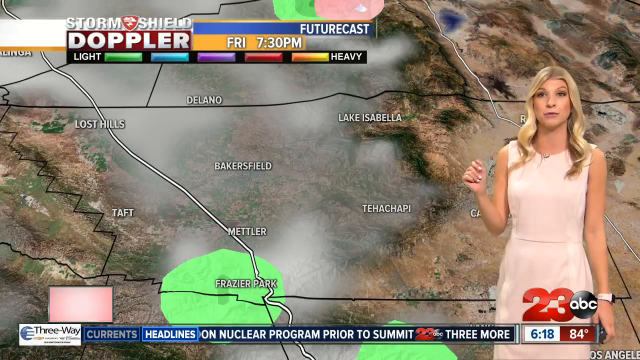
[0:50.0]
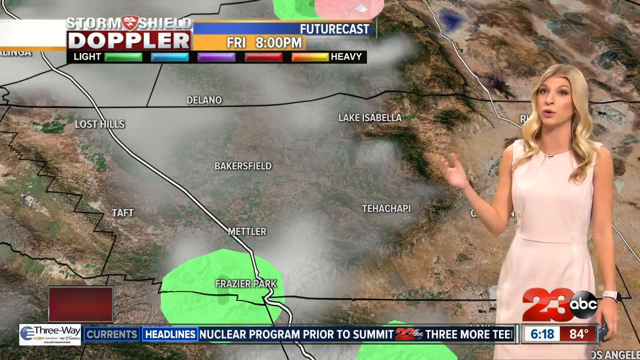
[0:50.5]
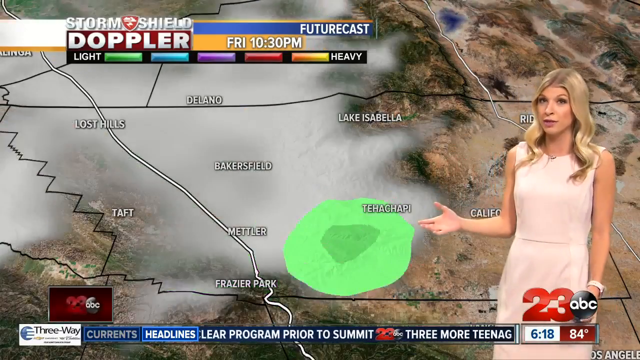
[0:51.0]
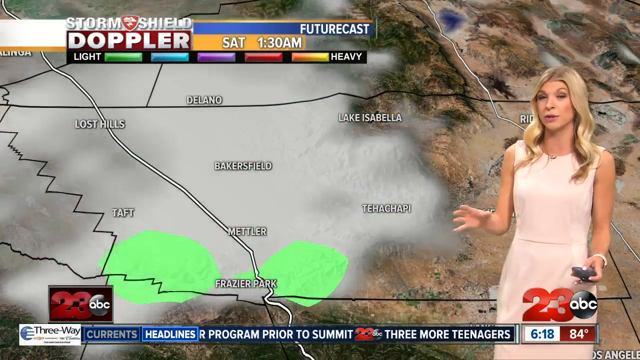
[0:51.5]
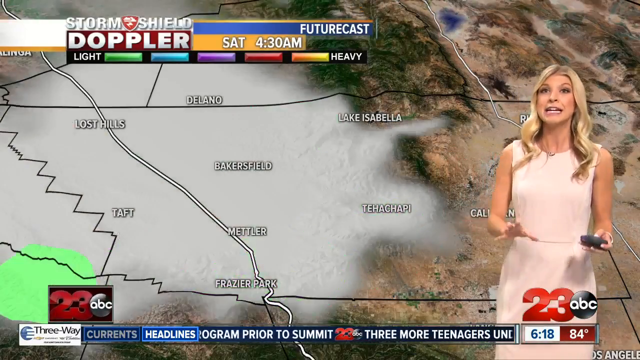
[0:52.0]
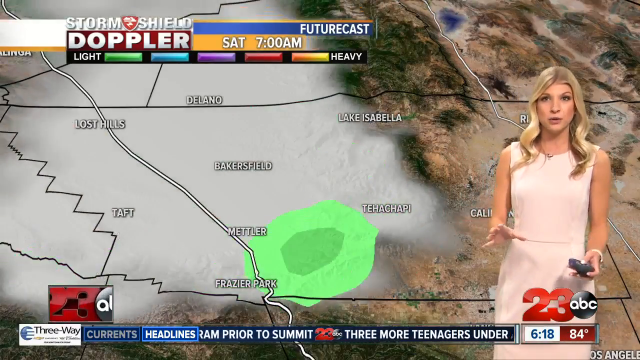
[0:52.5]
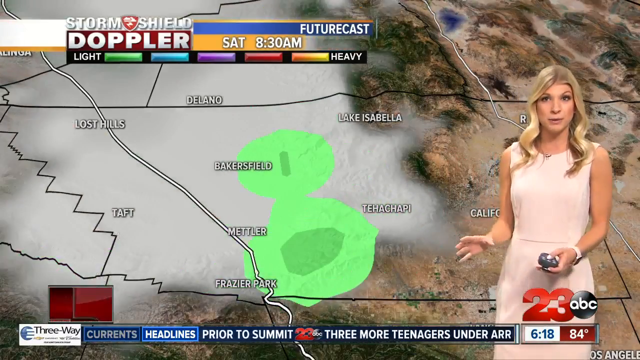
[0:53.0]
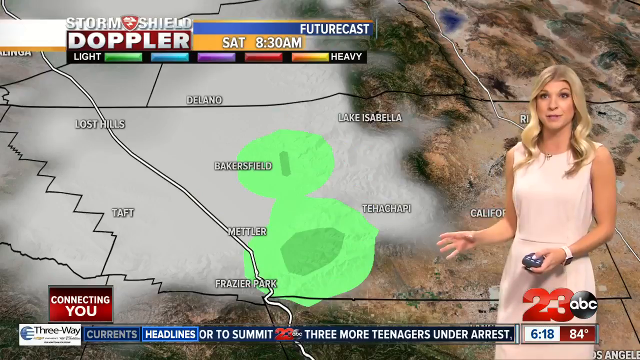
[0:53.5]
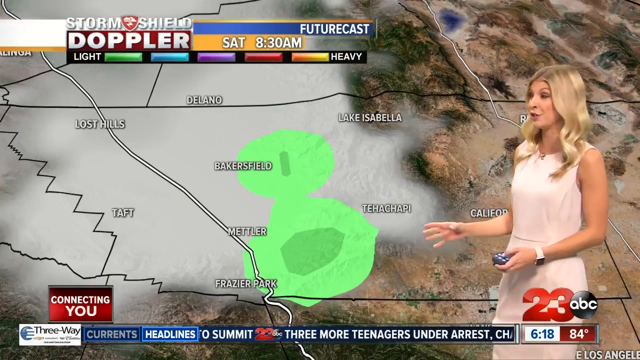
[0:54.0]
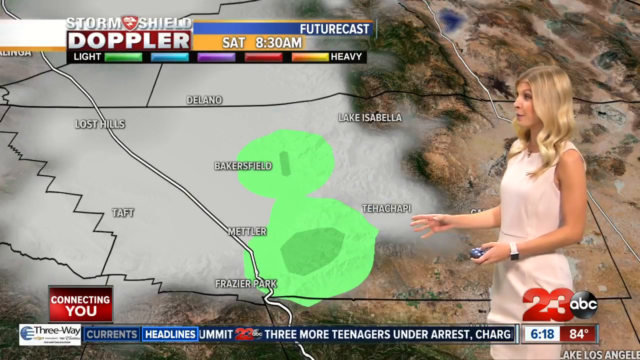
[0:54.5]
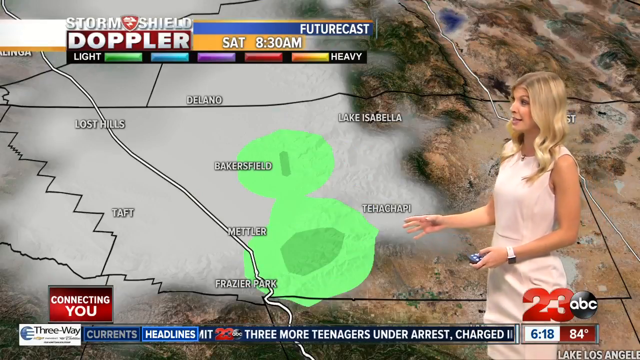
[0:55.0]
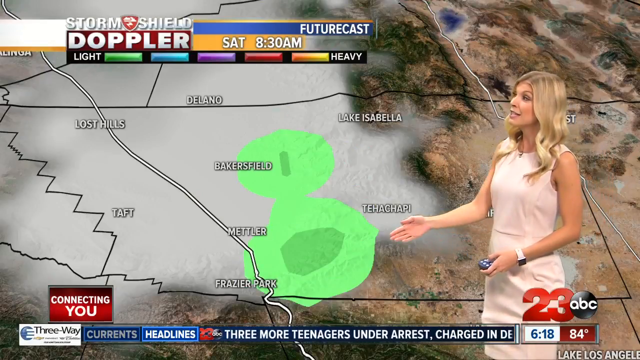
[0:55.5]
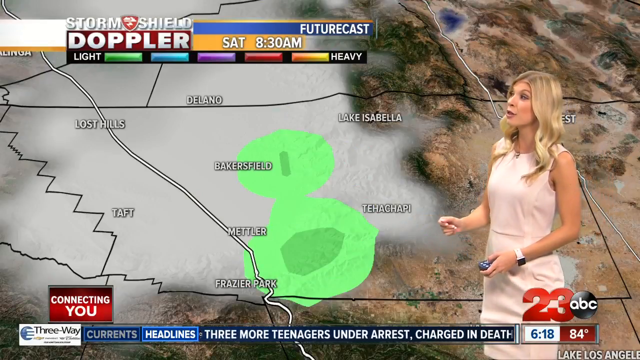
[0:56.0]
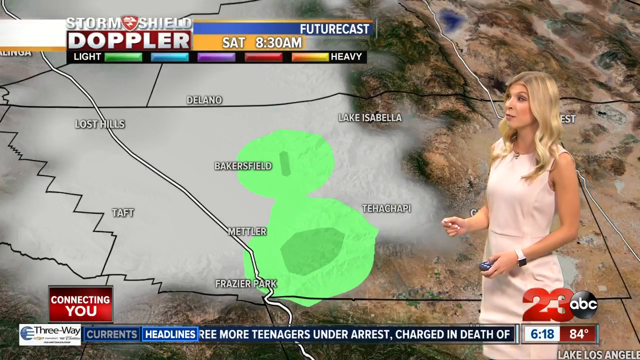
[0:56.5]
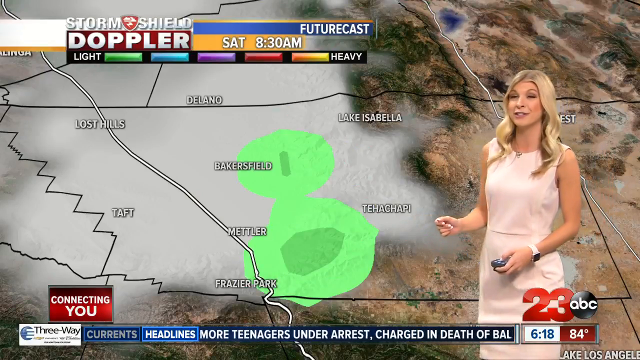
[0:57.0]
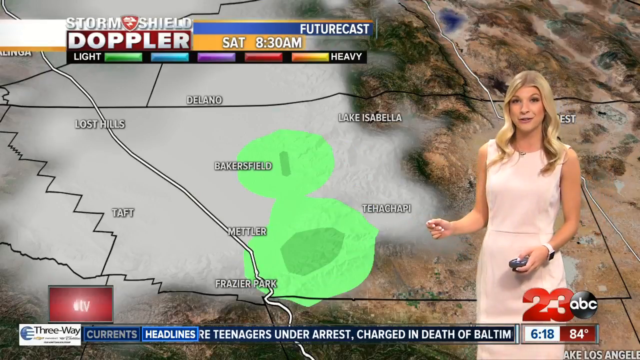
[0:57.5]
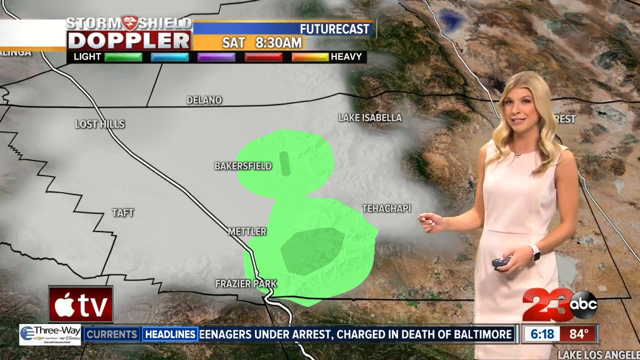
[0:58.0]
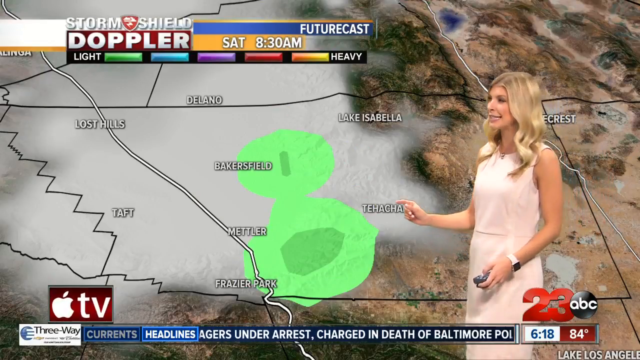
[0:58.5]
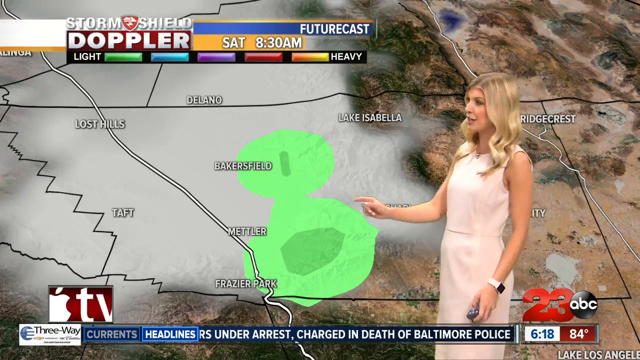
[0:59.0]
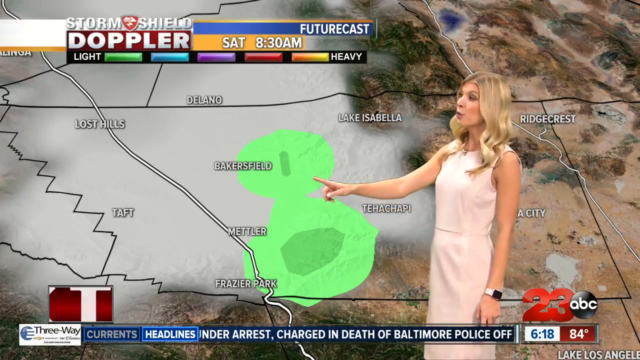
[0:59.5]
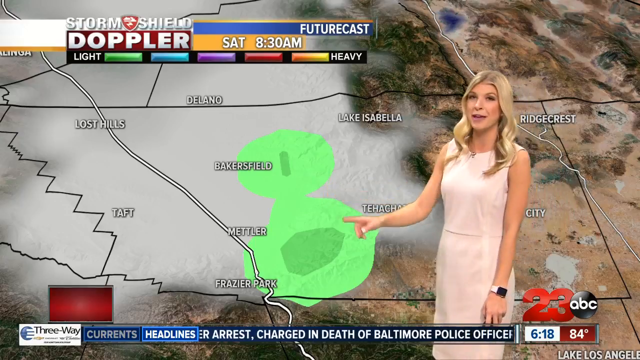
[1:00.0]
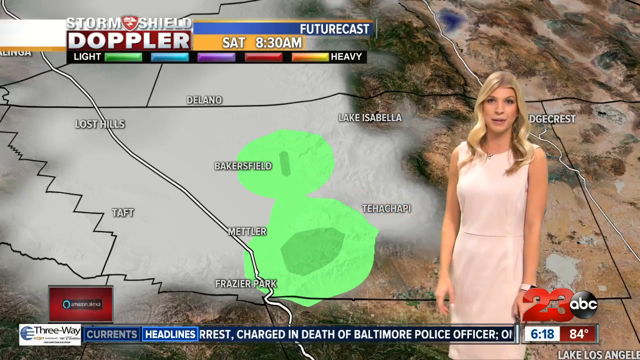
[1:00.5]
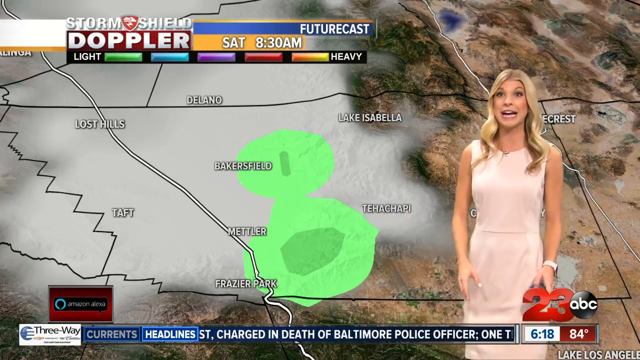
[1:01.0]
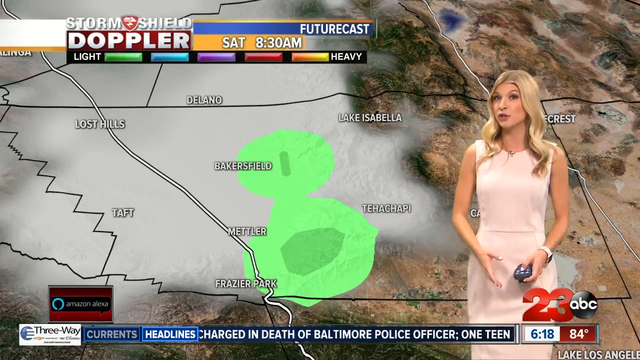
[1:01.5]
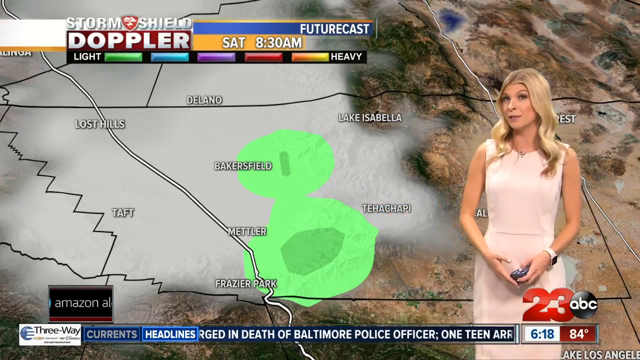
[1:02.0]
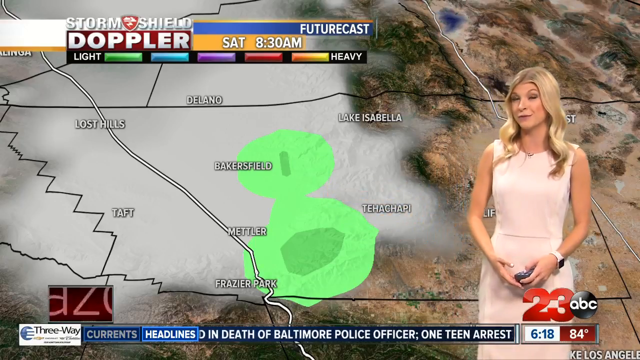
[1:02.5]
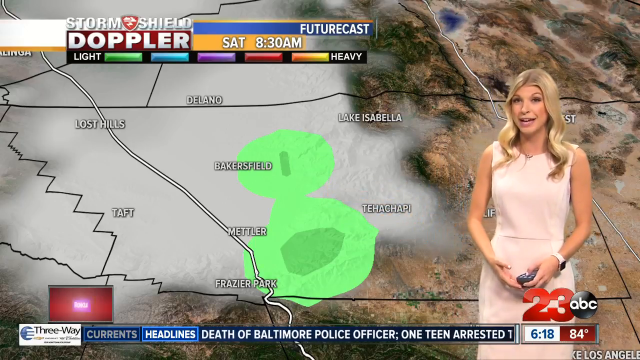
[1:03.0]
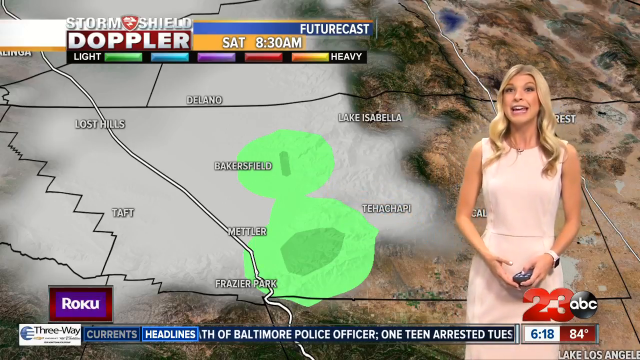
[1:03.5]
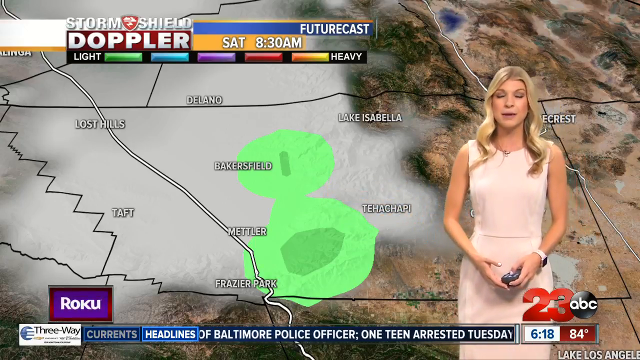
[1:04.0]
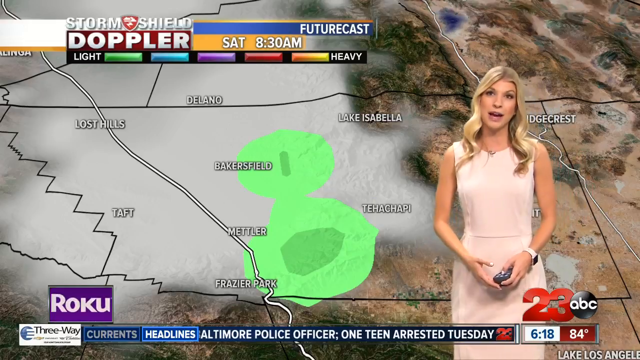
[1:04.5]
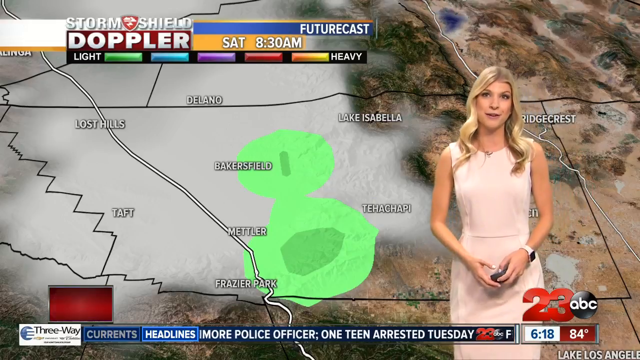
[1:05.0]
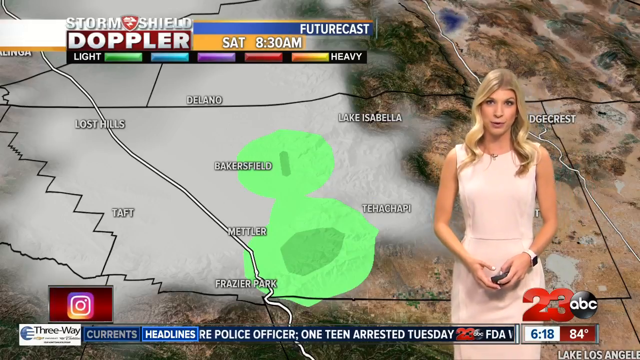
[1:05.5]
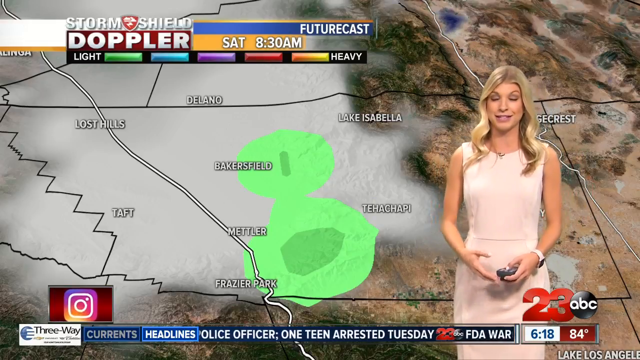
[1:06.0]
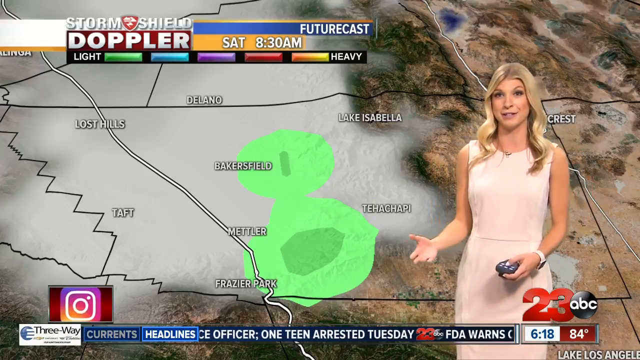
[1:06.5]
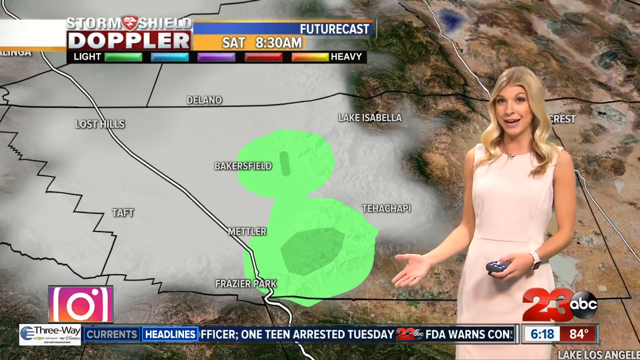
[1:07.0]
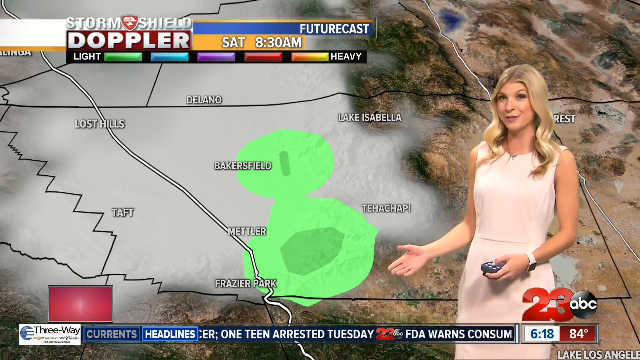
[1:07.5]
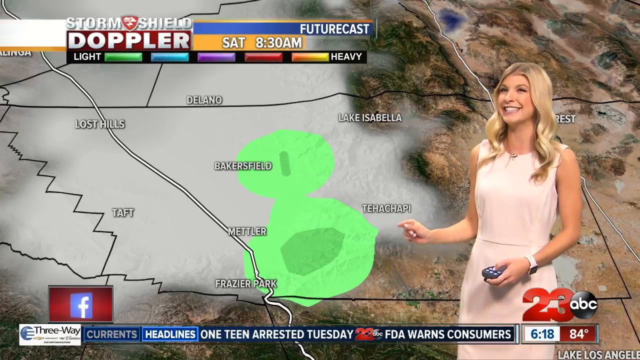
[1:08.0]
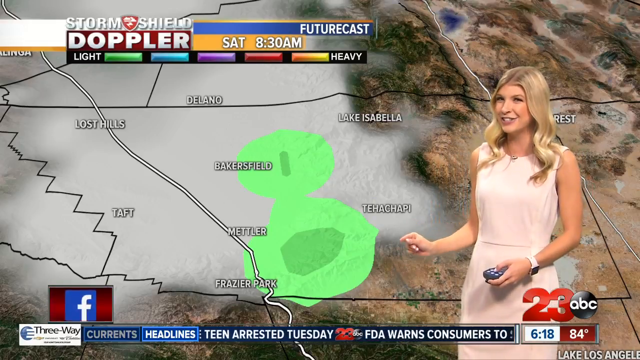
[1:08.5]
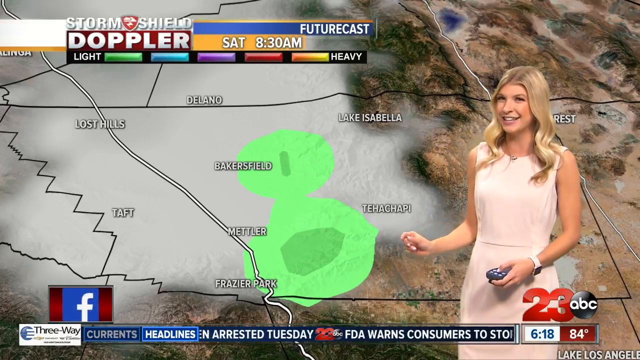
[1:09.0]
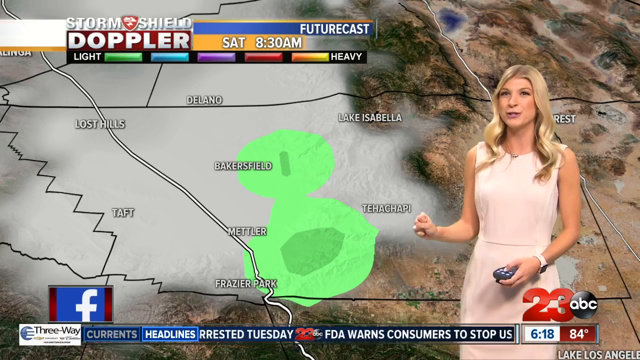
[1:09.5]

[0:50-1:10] The weather reporter is shown with the movement of the storm over an area that looks like California. From Friday night through early Saturday the storm seems to move toward the northeast. On Friday night the sky is mildly overcast with clouds; toward dawn the cloud layer seems to thicken, and at 8:30 a.m. on Saturday the storm solidifies over Bakersfield, Mettler, Fraser Park and Terra Capi. The center of Bakersfield and the center point between Mettler, Terra Capi and Fraser Park seem to have the lighter storm, while the region around them has the strongest storm, though still considered light. The rest of the region is only overcast with clouds. At no moment does the storm get above a light rating, at least for Saturday.